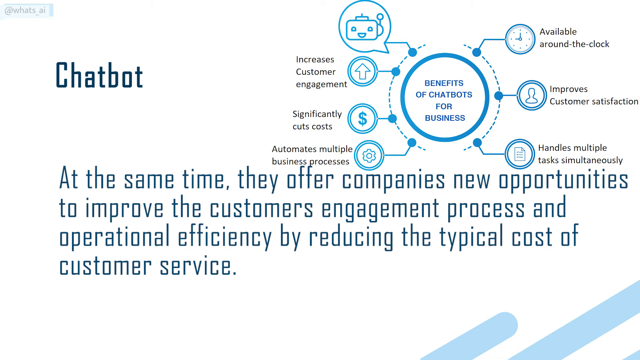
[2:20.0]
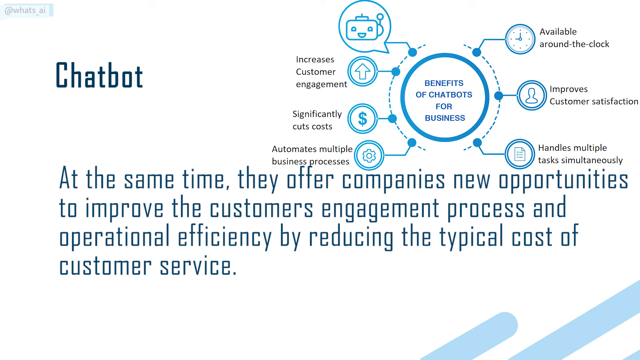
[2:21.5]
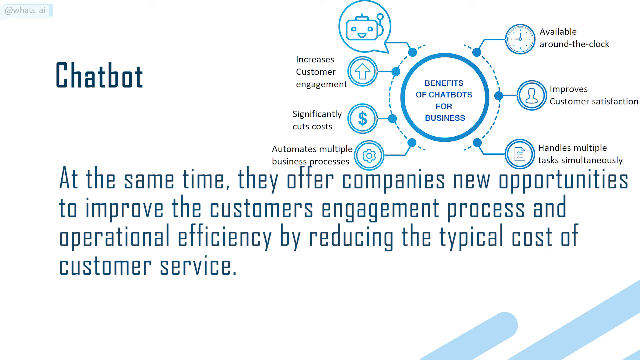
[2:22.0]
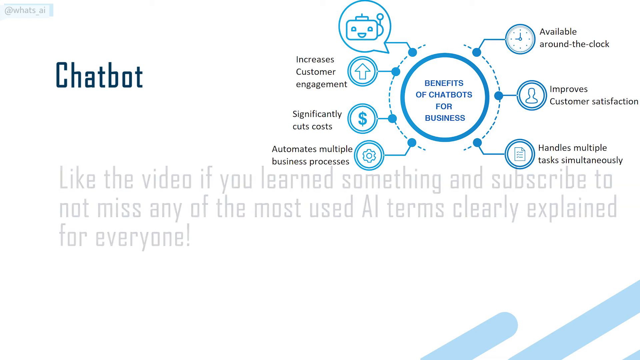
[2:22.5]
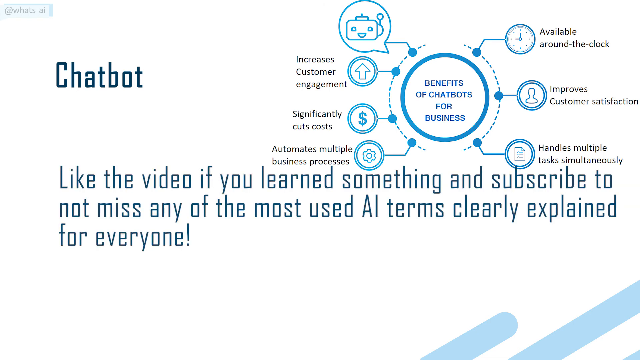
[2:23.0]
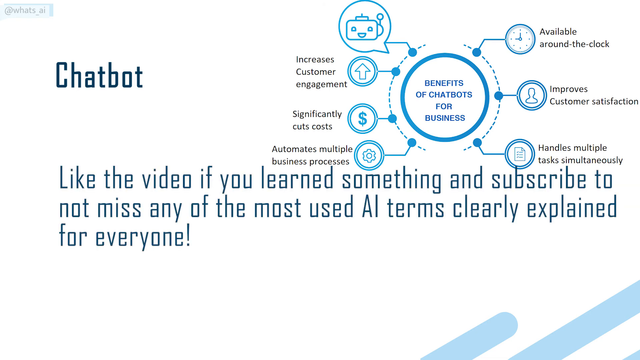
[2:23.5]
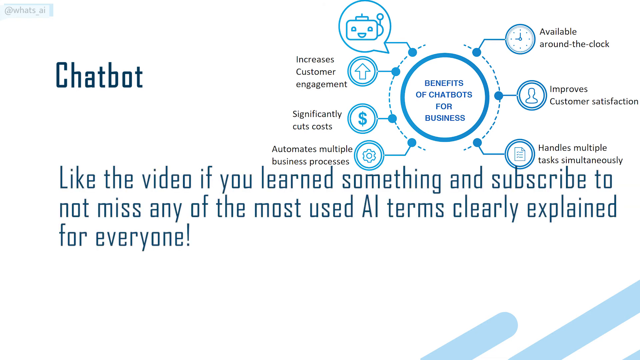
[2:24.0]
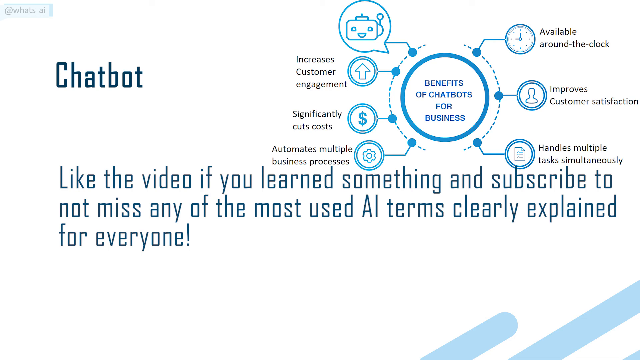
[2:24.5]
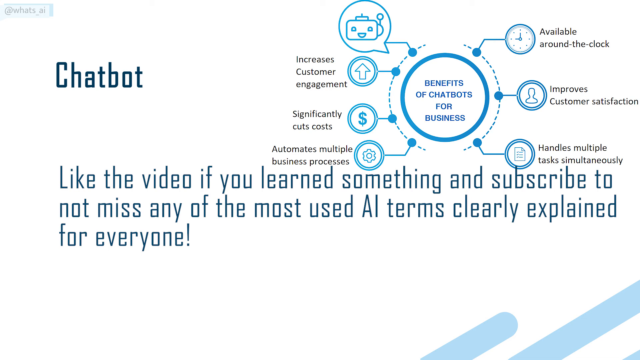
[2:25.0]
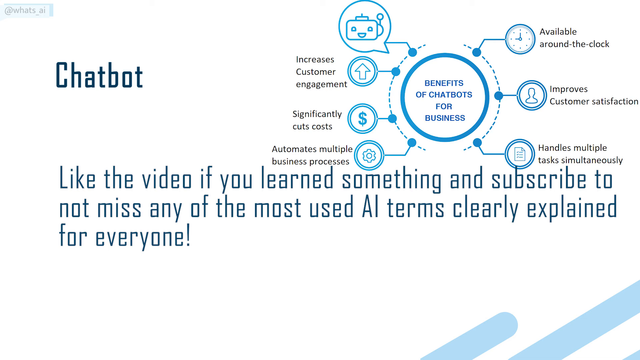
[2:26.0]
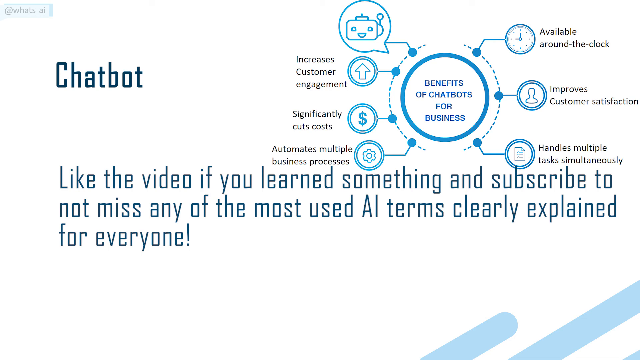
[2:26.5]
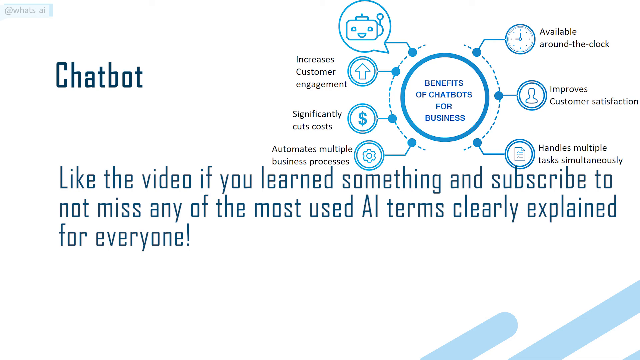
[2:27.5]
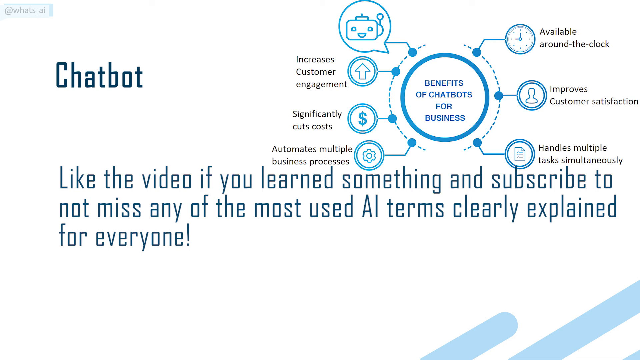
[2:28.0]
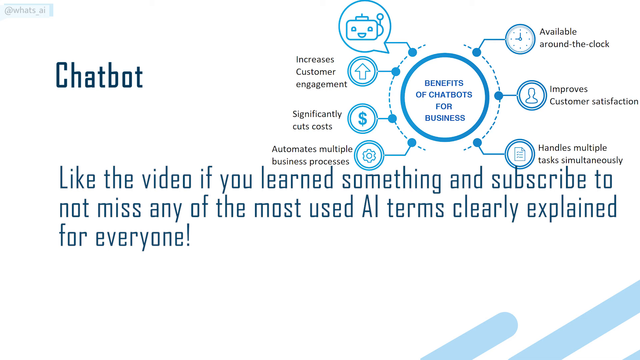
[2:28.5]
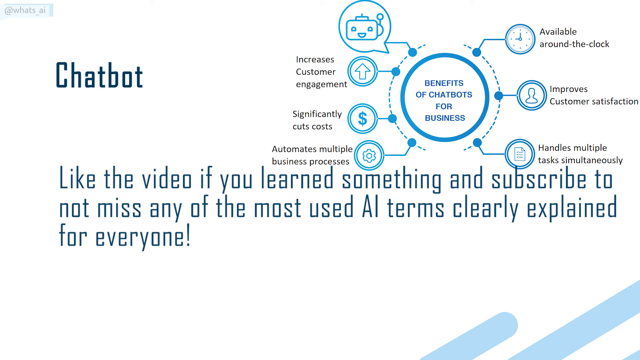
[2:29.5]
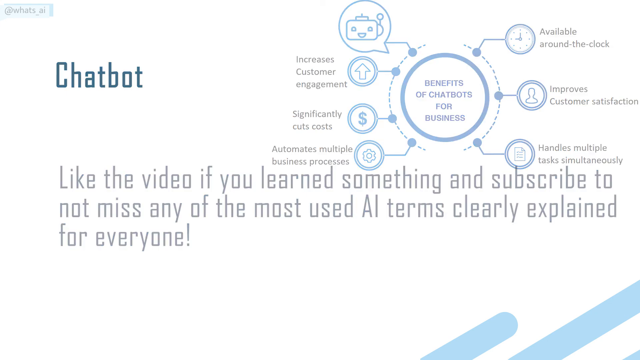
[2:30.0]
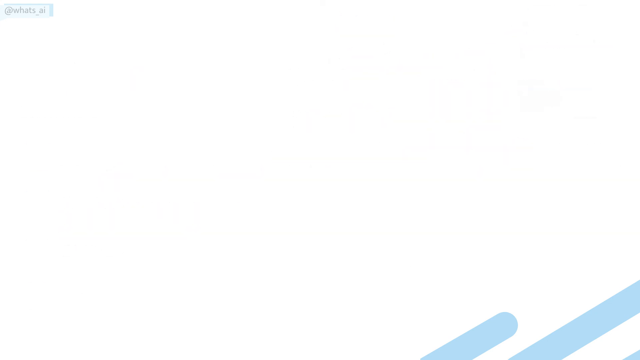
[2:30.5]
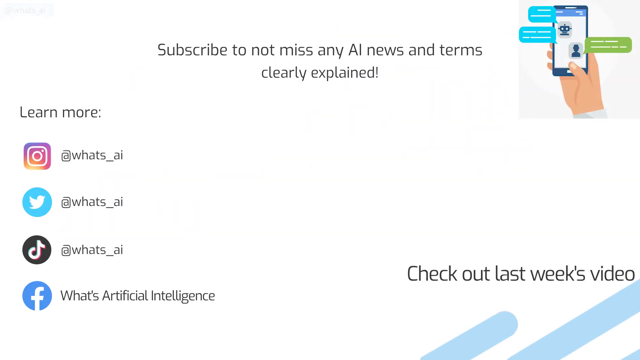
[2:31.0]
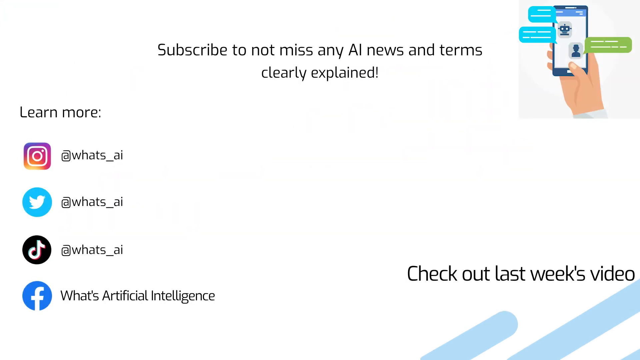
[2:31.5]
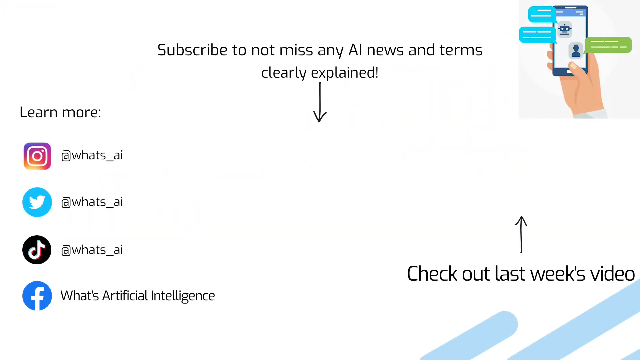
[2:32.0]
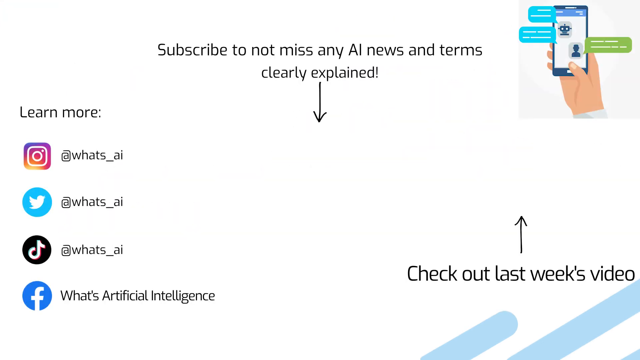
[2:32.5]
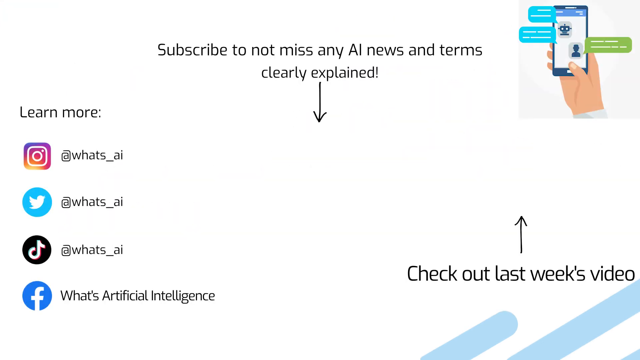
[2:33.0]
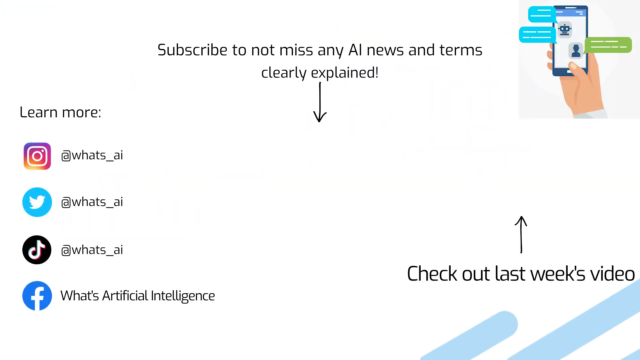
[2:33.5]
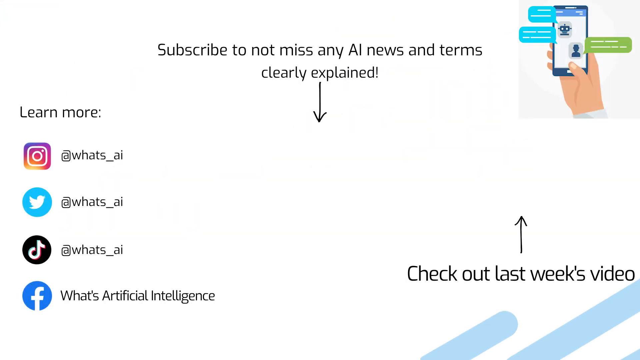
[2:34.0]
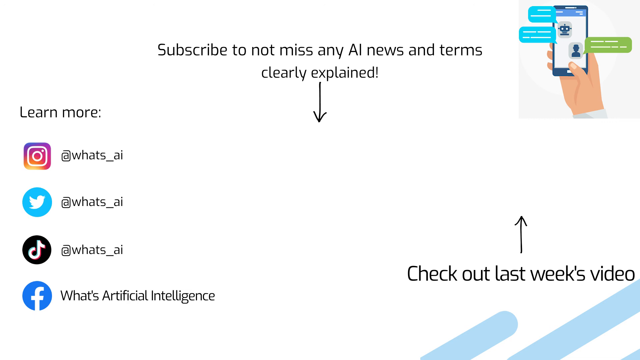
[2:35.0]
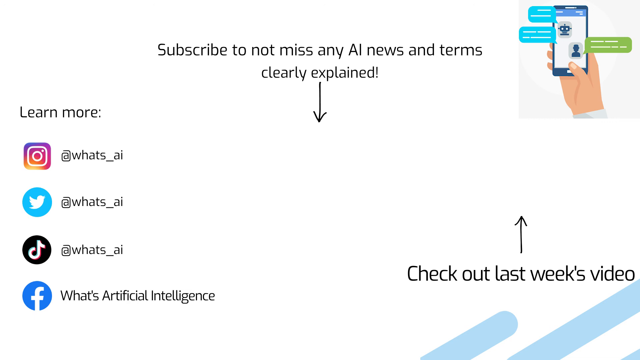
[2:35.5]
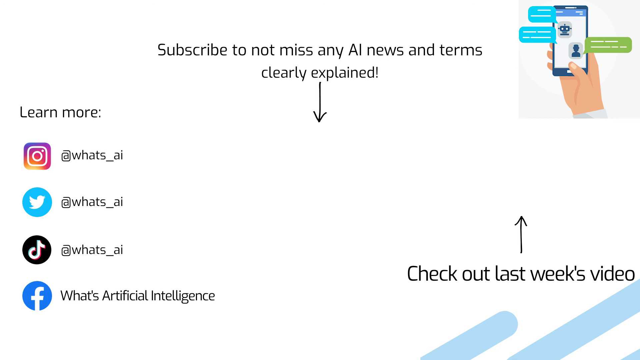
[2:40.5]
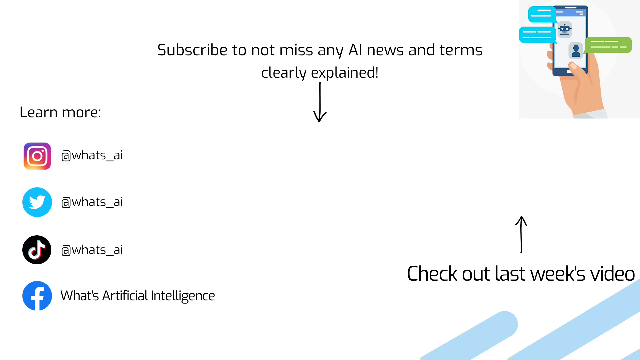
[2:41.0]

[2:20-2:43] Information about chatbots is on screen, reading "at the same time, they offer companies new opportunities to improve the customer's engagement process and operational efficiency by reducing the typical cost of customer service." Then the text says "like the video if you learned something and subscribe to not miss any of the most used AI terms clearly explained for everyone," while the diagram at the top is still there. The video then cuts to a page that says "subscribe to not miss any AI news and terms clearly explained" with an arrow pointing down. On the left it says "learn more" with Instagram, Twitter, TikTok and Facebook; on the right it says "check out last week's video," with a clickable clip up at the top. This final page stays on screen.